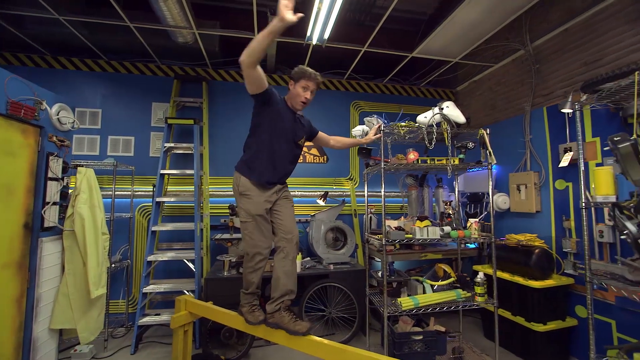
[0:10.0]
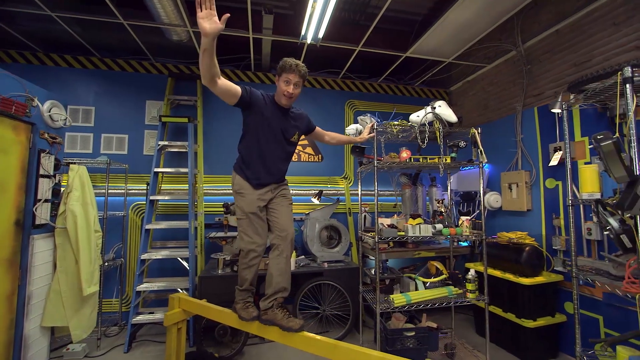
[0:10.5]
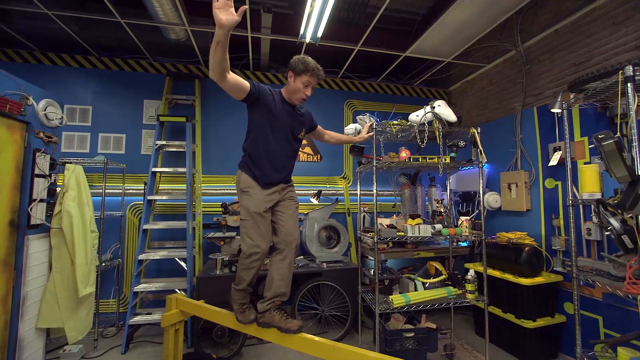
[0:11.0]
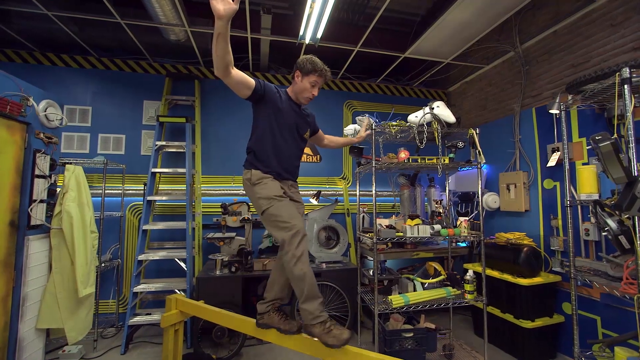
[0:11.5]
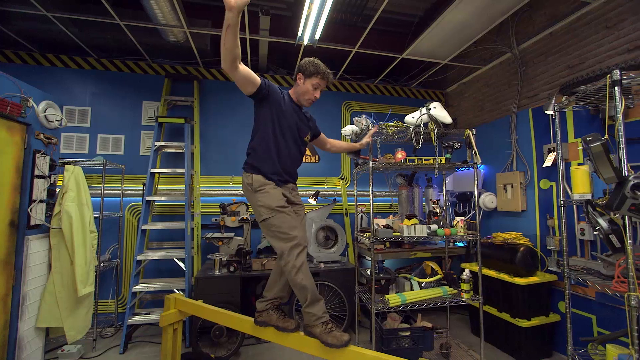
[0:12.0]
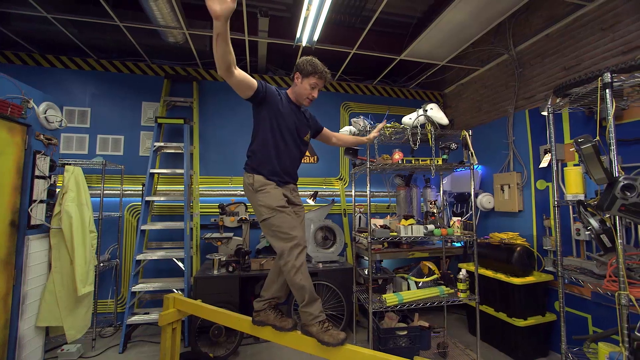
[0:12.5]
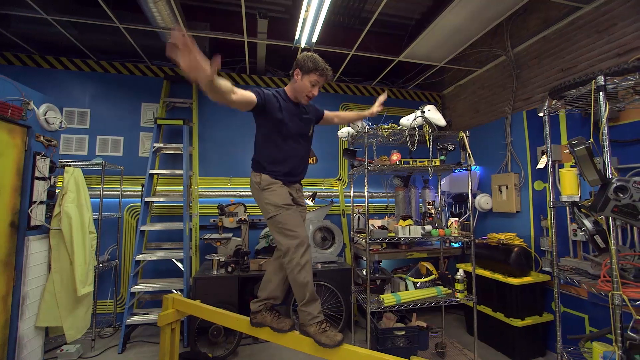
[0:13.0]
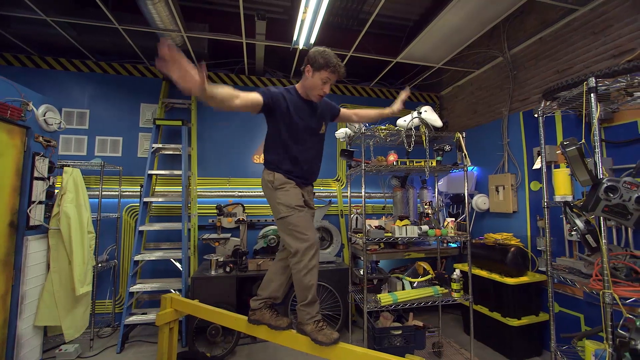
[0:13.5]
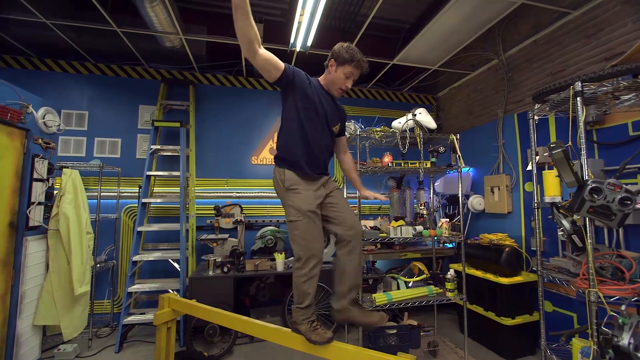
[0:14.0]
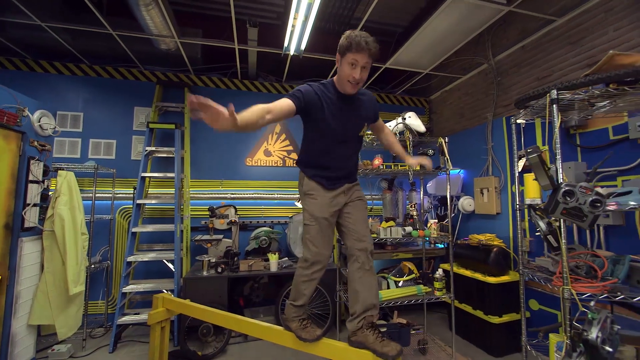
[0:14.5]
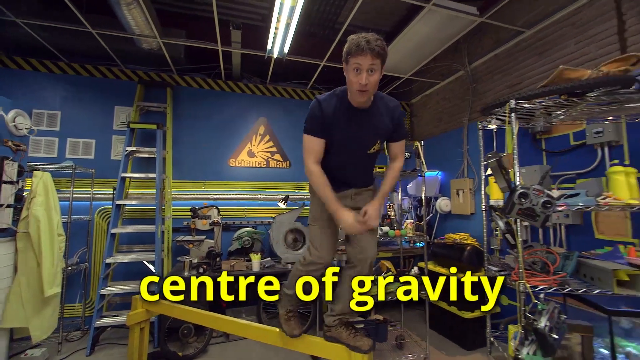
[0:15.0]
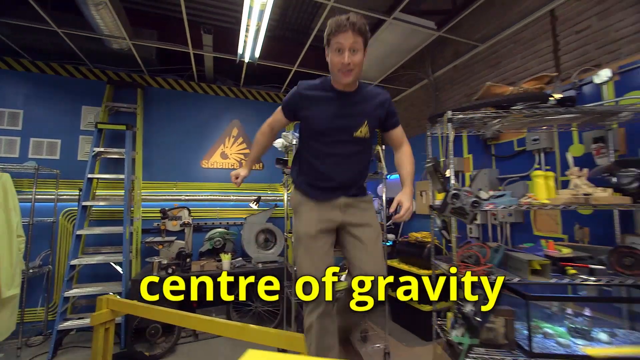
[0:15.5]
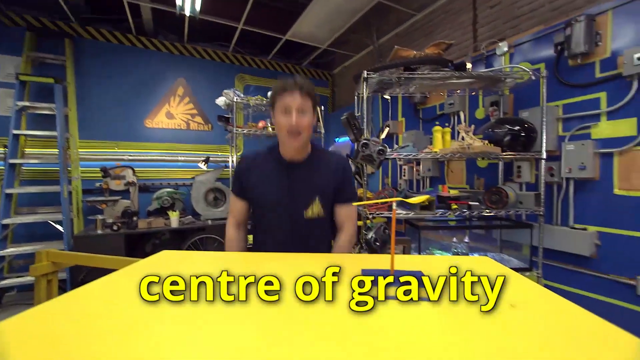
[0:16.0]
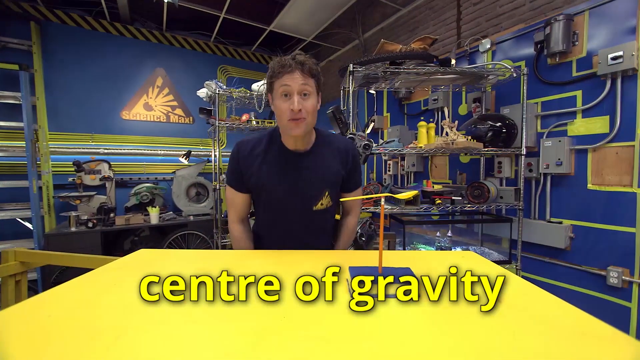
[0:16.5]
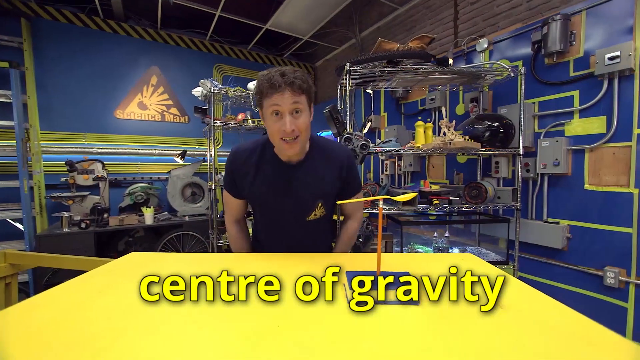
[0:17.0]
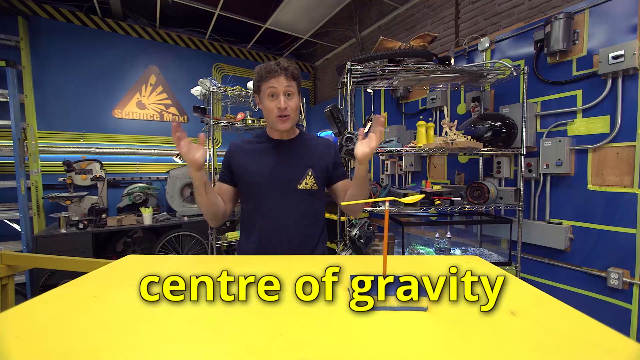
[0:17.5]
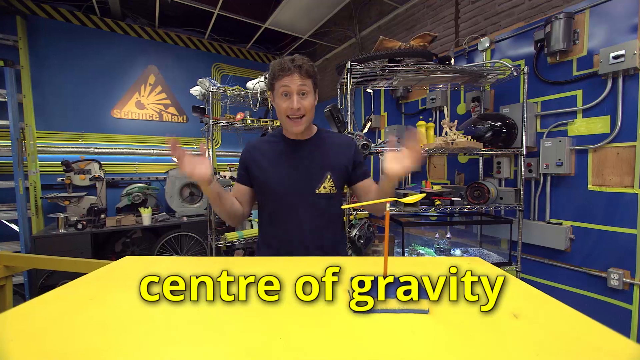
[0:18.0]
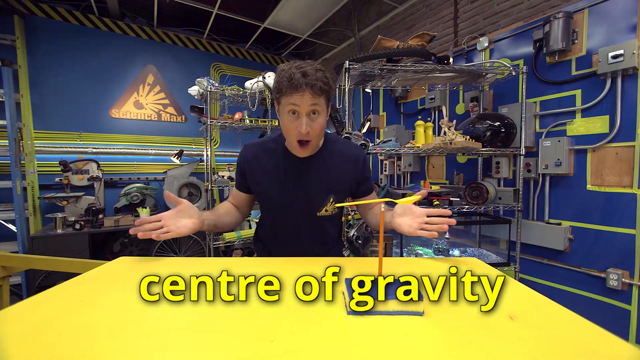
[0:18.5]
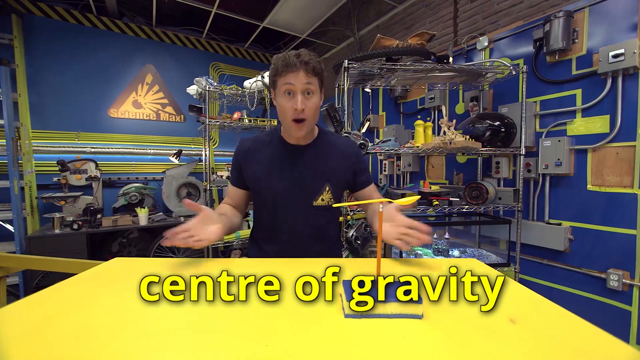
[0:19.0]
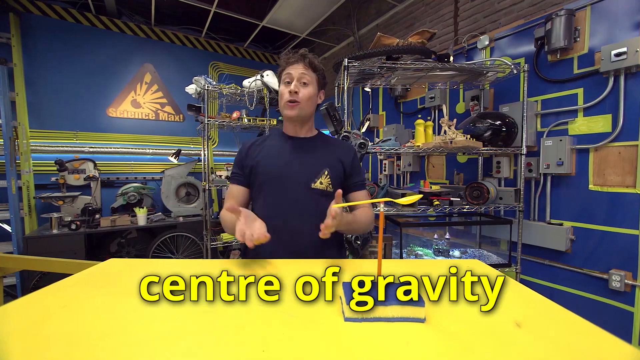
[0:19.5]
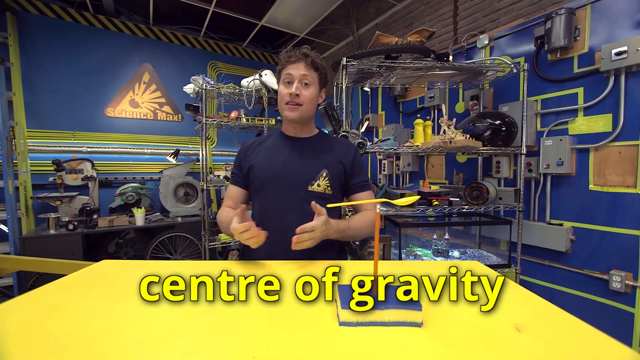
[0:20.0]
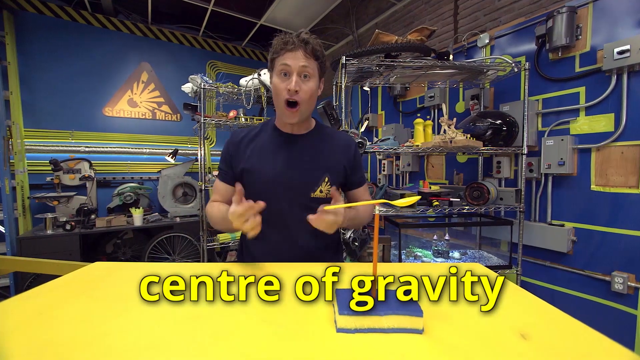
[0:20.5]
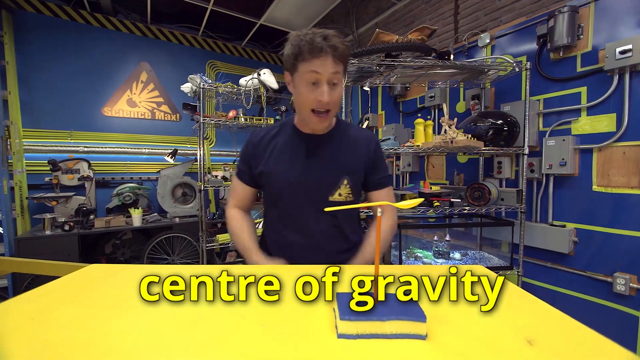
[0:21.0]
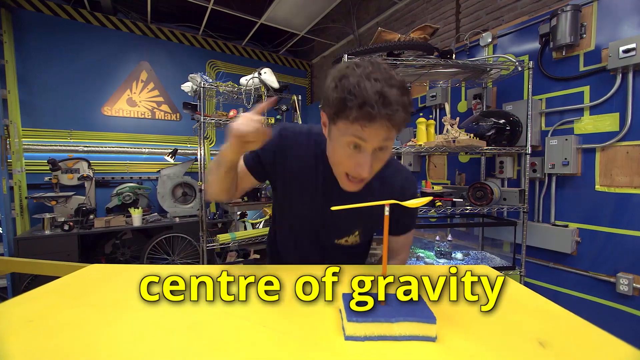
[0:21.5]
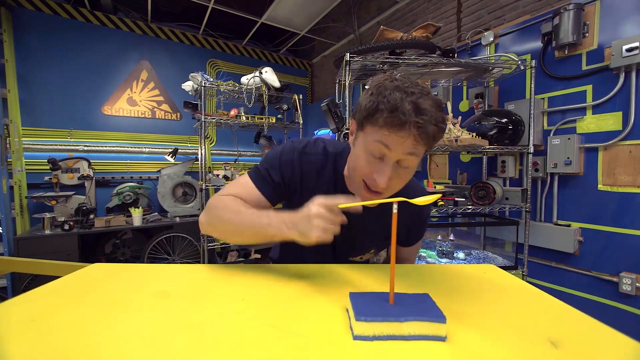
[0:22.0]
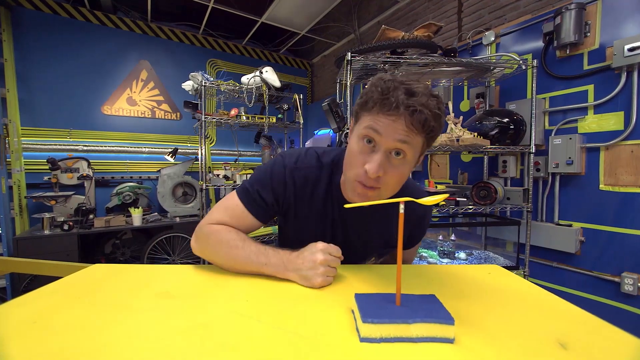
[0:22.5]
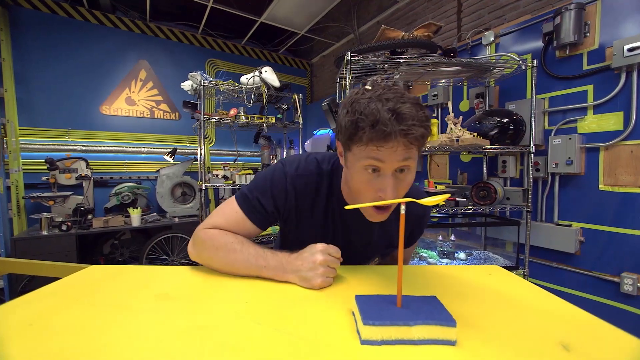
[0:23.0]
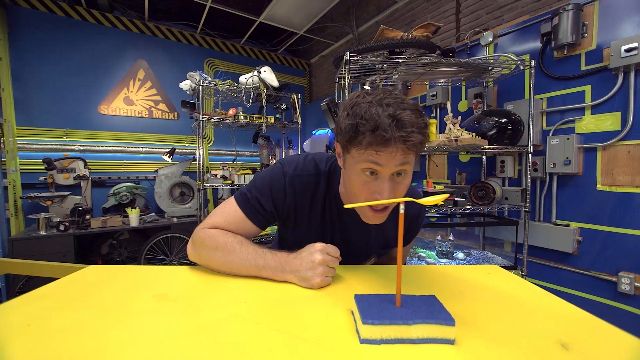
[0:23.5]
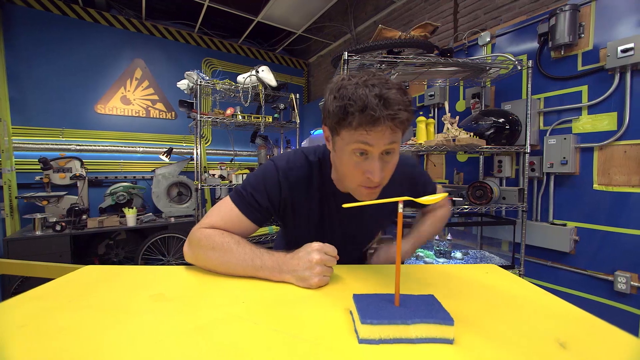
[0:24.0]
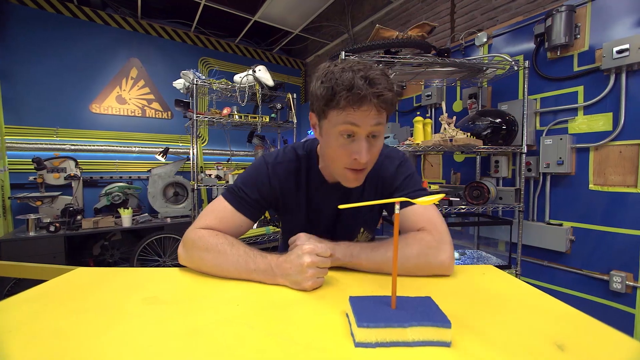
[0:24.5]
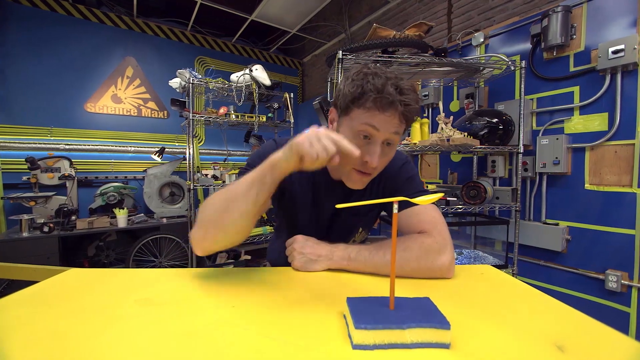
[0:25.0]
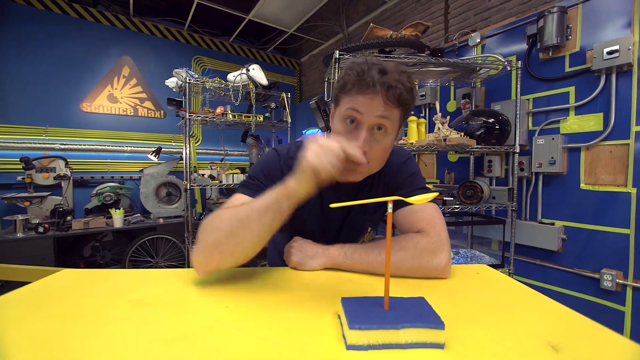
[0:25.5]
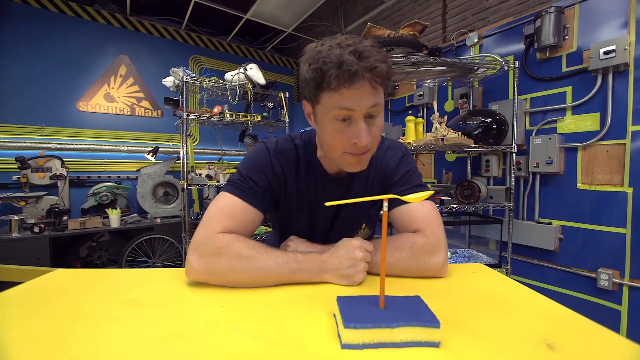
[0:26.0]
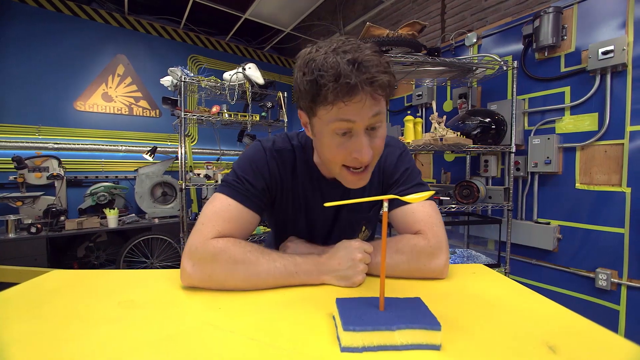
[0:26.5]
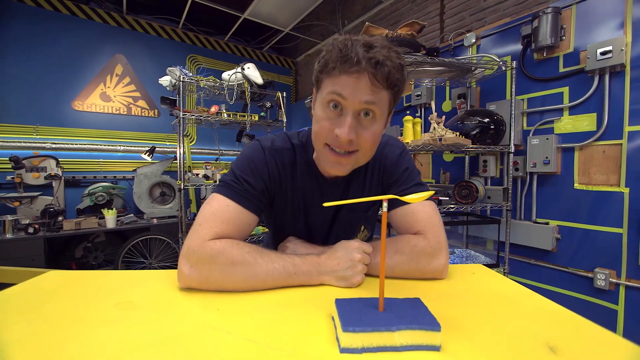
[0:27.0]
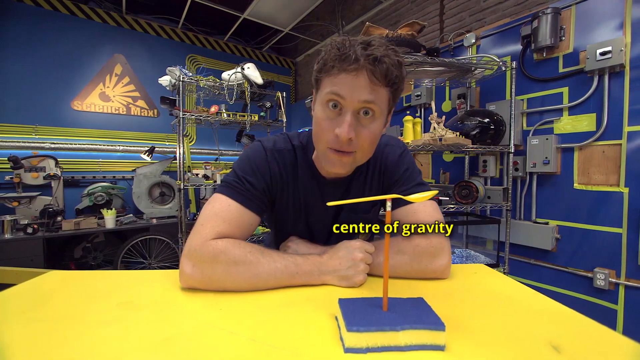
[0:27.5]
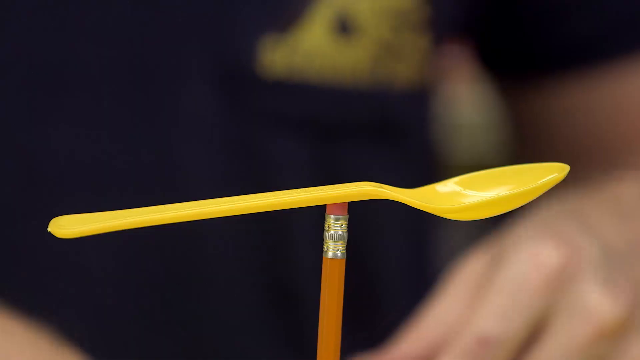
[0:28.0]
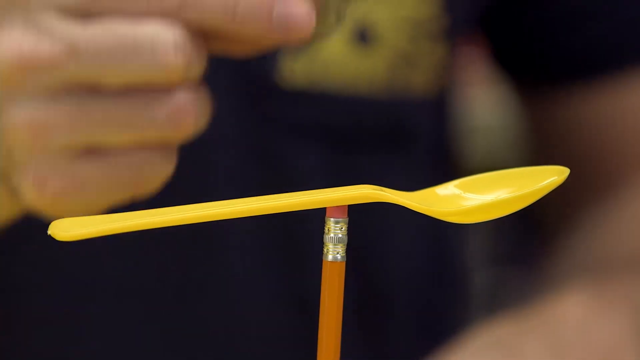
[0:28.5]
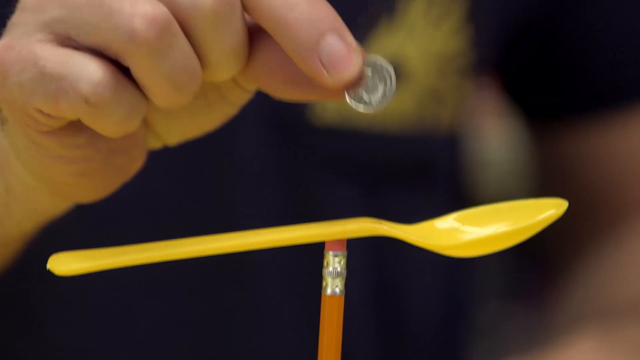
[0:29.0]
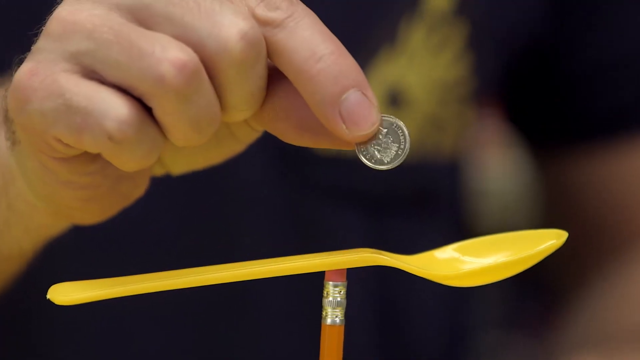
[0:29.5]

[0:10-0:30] A man stands on a yellow bar in the middle of a very messy room. He wears brown shoes, brown pants and a dark blue shirt, and has short brown hair. His left arm is held out so he is leaning on a shelf on the right side of the frame, and his right arm is up over his head. He has a wary look on his face. He turns his body slightly to the right to speak toward the camera, then brings his gaze back down to the yellow bar. He takes a step forward, his arms wobble and he tries to balance, then takes another step forward while looking at the camera. Yellow text moves from the left side of the frame to the center, reading "center of gravity". The man hops down from the bar with a smile on his face and steps in front of a yellow table. On the table is a blue platform with a pencil on top of it, and a yellow spoon placed on the rubber end of the pencil. The man holds both arms out in front of him as he speaks in an excited manner. He leans forward and points with his right hand toward the spoon, placed precariously on top of the pencil. He looks up, brings his gaze back down to the spoon and continues to speak. He brings his left arm up to rest on the table surface and points his right arm down at the yellow spoon, then looks down at the spoon and up again as he continues speaking to the viewer. The text "center of gravity" moves in from the left side of the frame and appears right below the yellow spoon. A close-up then shows the yellow spoon and the pencil. A man picks up a coin, pinches it between his pointer finger and thumb, and hovers it over the spoon.